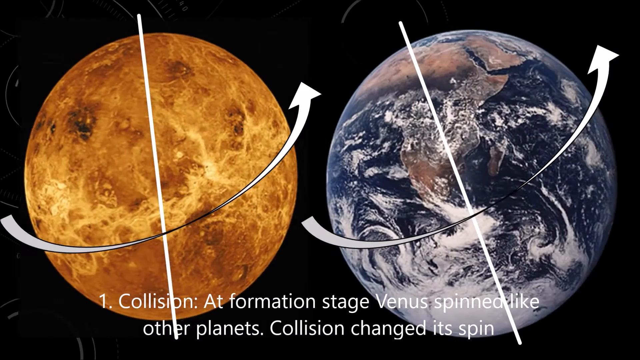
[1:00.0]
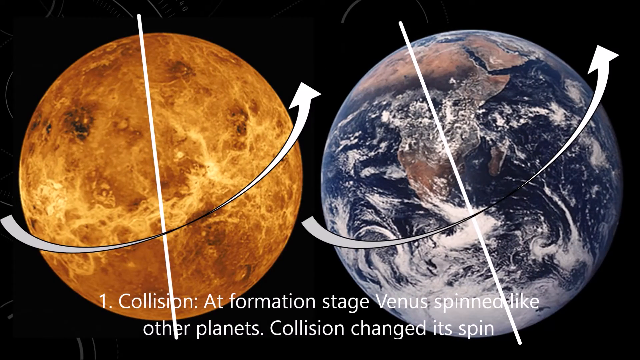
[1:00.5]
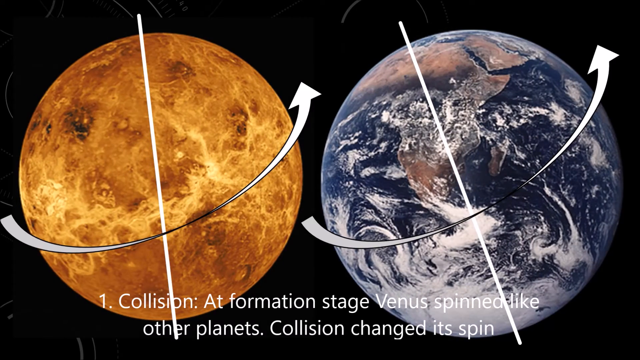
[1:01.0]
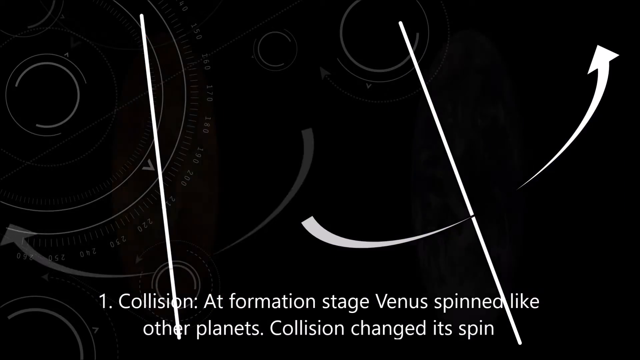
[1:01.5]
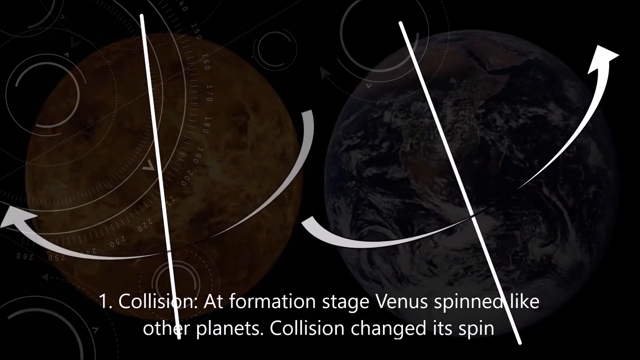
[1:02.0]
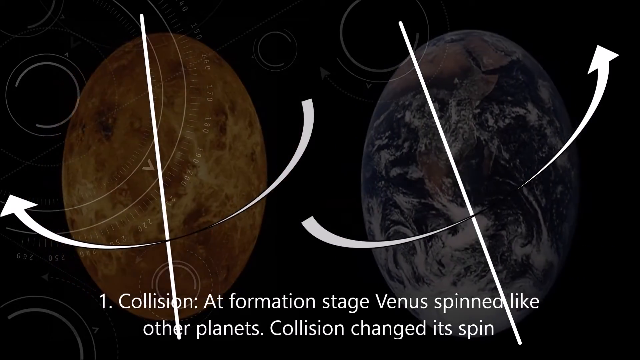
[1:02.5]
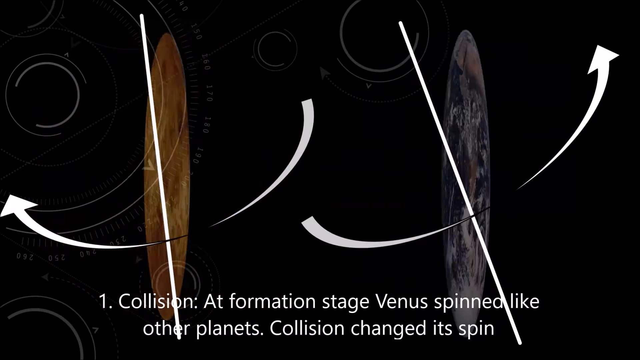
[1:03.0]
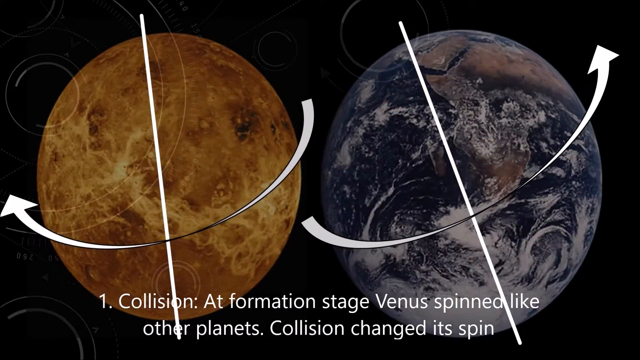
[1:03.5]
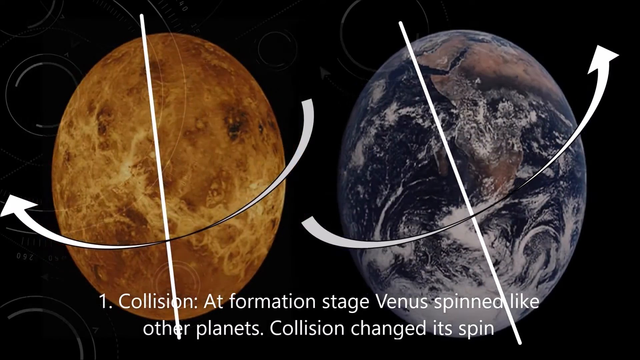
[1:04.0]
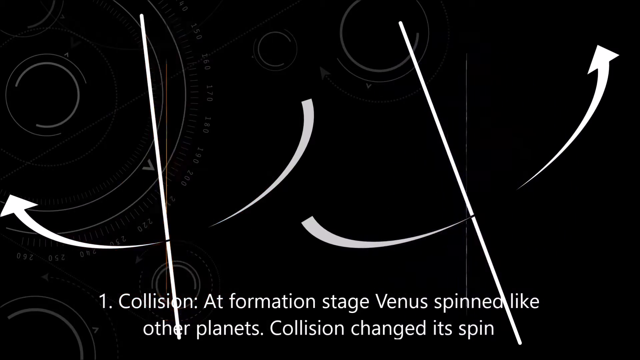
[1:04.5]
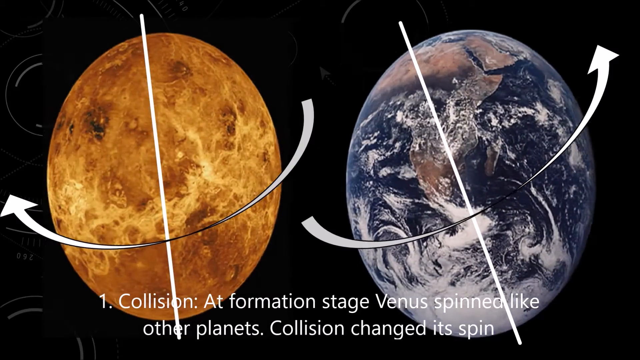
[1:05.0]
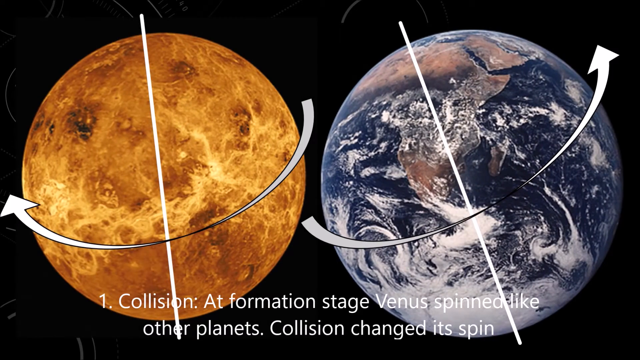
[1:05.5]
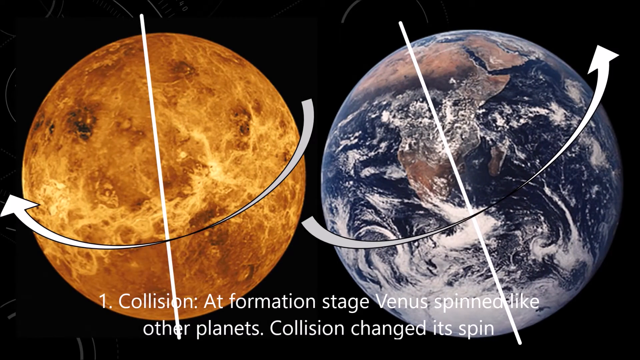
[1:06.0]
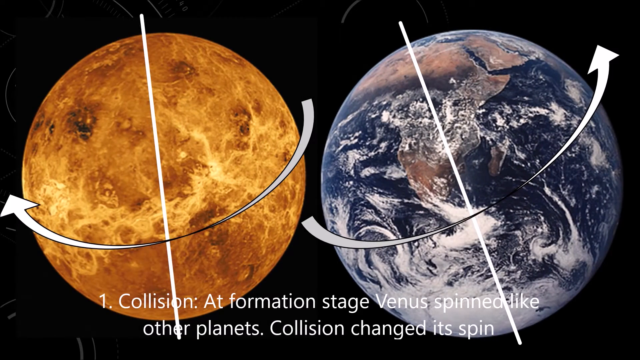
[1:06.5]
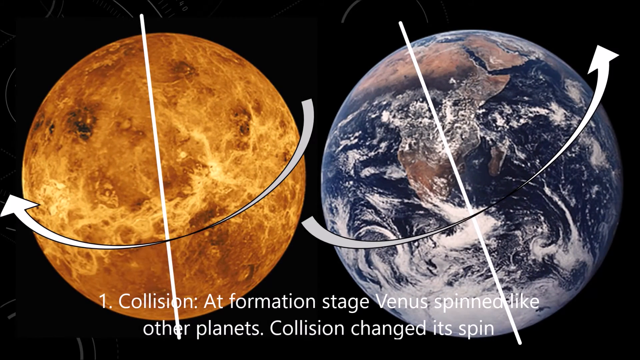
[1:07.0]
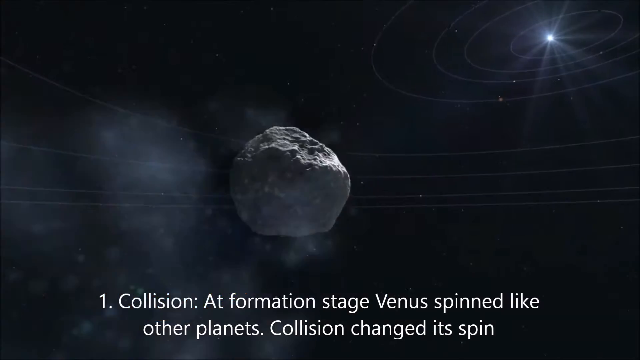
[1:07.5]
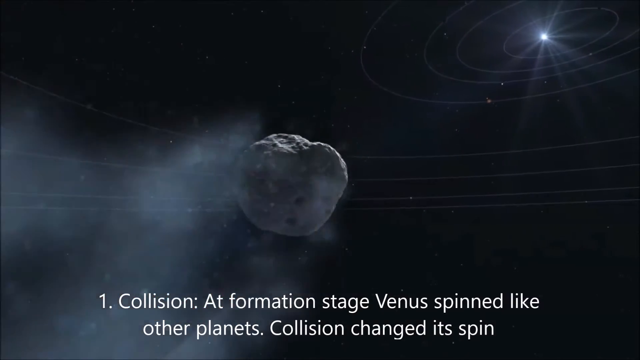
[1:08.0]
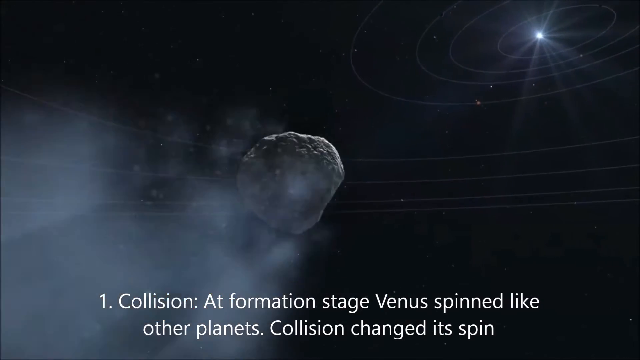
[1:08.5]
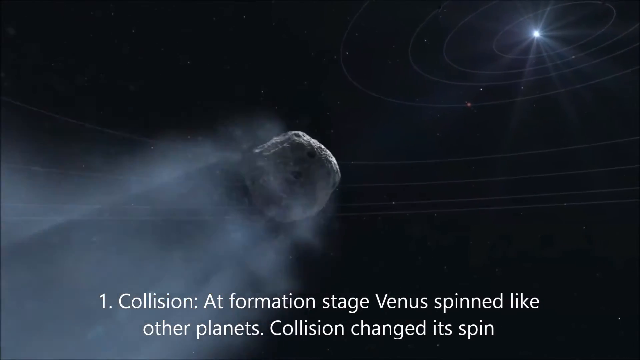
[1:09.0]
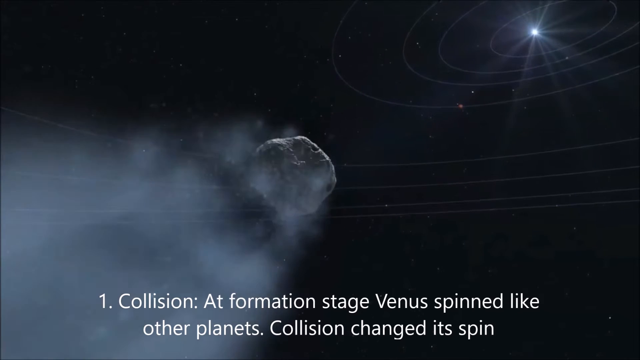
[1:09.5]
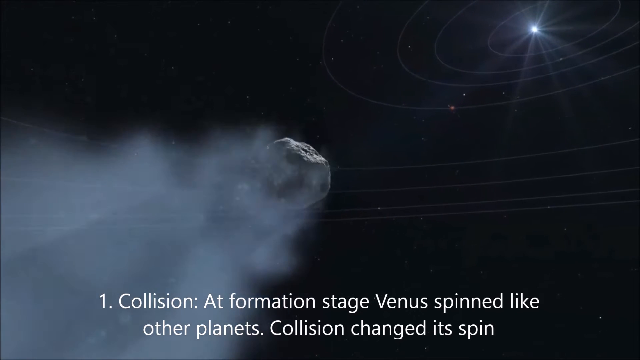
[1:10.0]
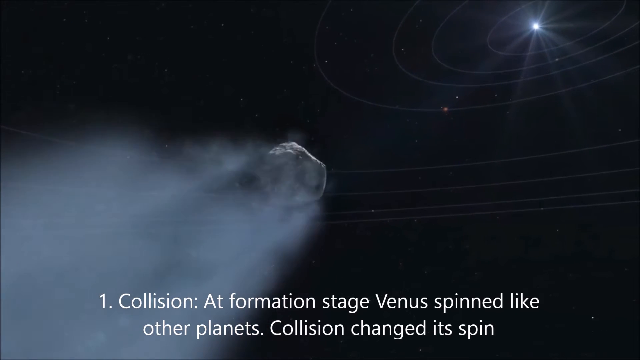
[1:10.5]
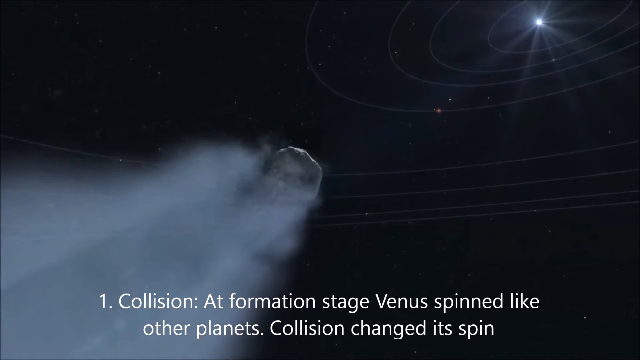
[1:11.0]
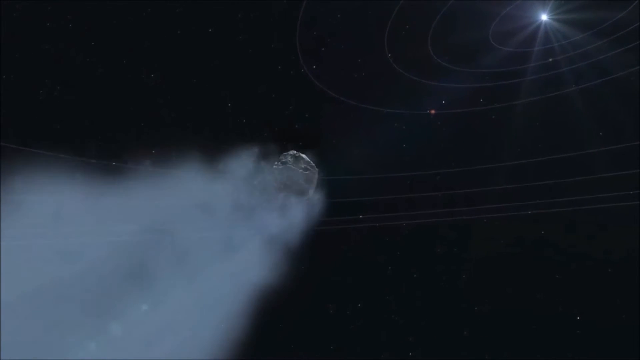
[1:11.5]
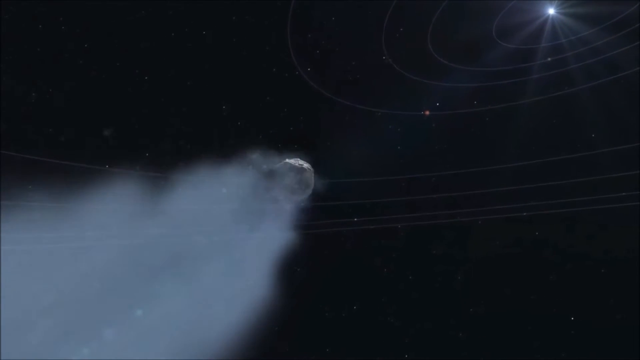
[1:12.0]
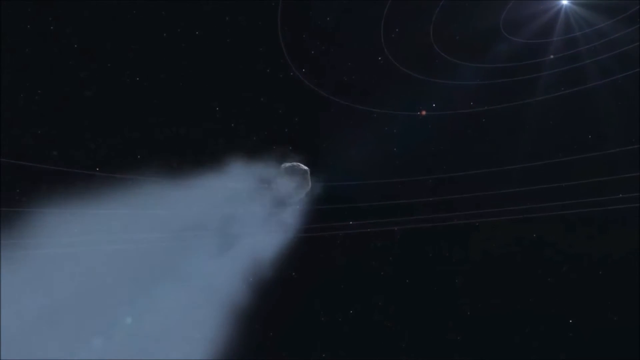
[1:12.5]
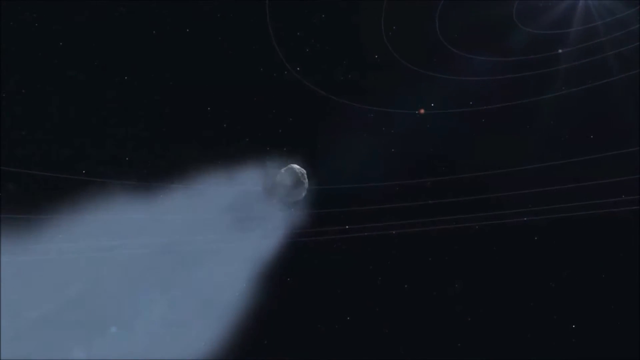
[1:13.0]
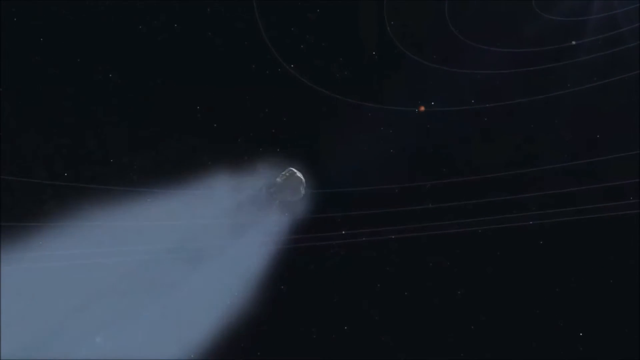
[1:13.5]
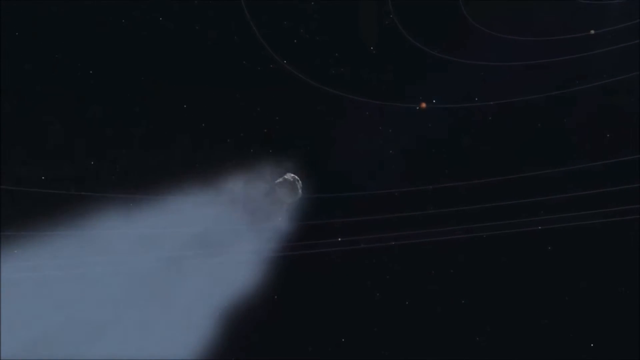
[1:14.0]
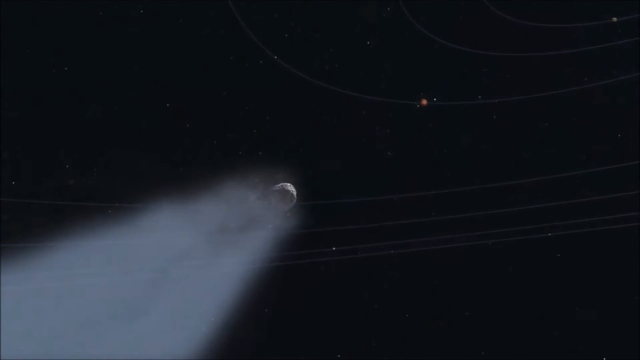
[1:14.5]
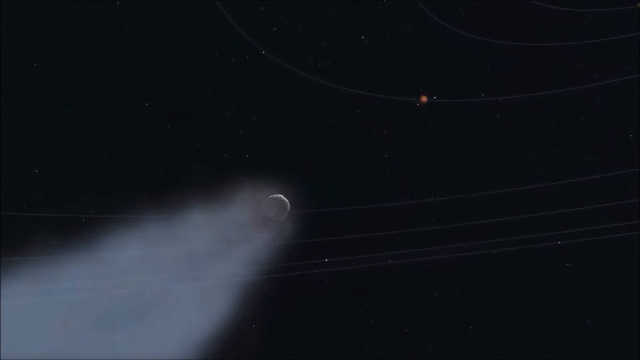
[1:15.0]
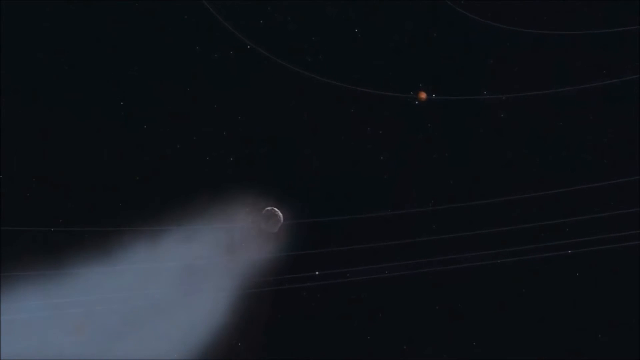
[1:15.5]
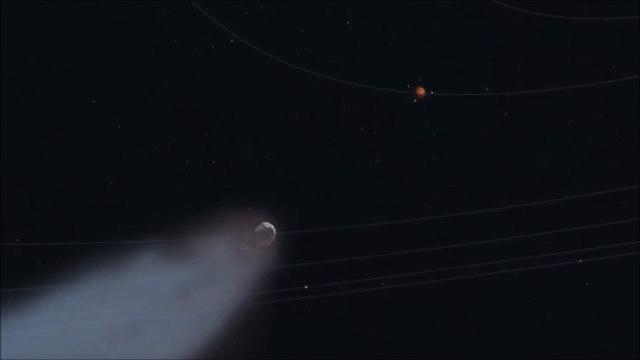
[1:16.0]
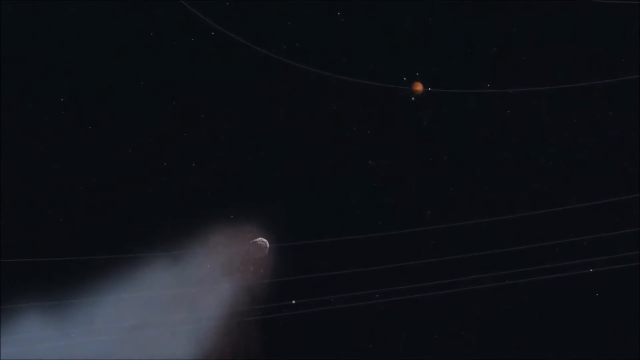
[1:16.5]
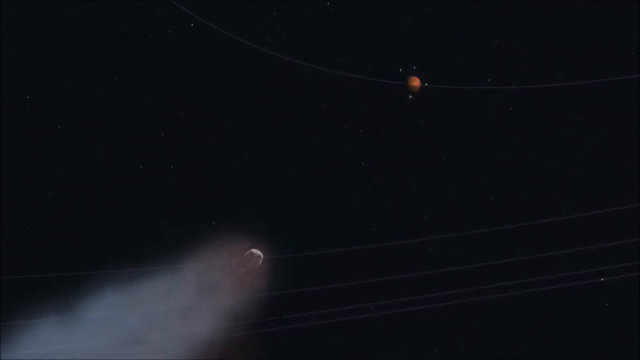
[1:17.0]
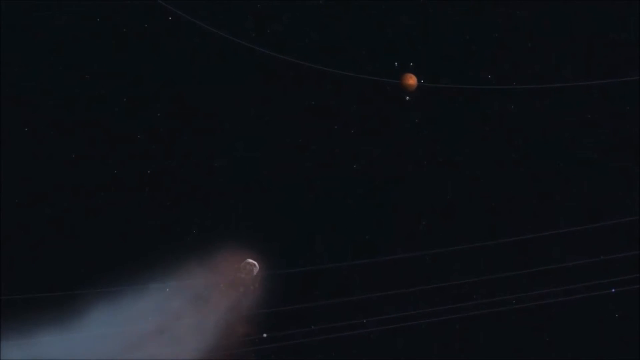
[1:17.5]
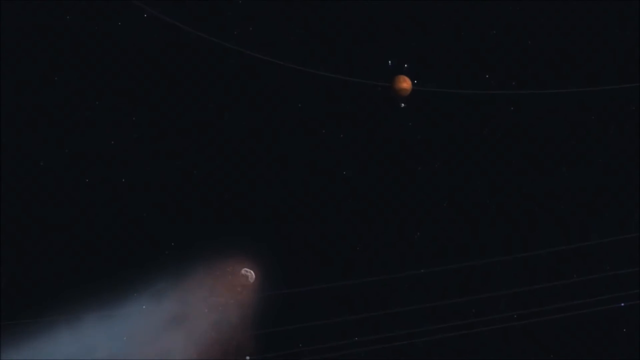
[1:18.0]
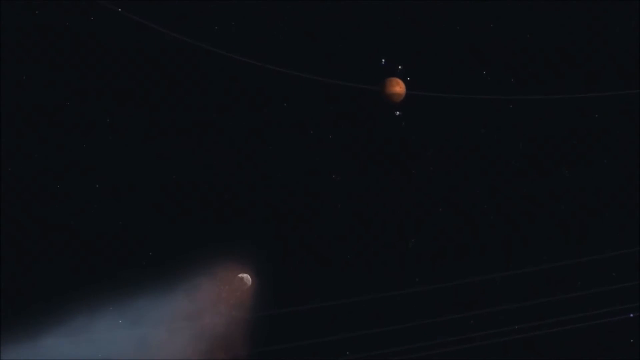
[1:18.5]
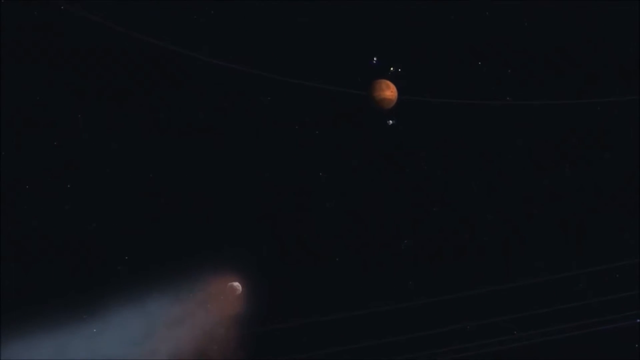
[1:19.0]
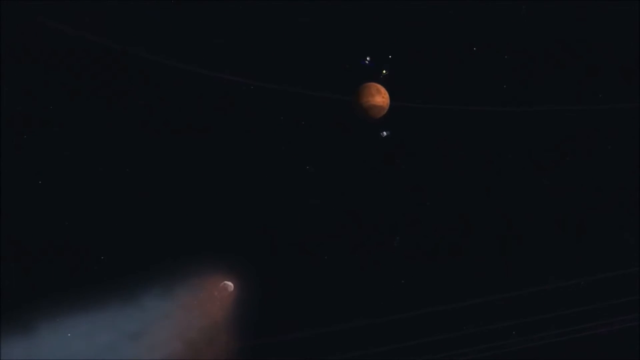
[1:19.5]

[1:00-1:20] Both planets remain on screen, both slightly slanted and still showing the line running from top to bottom; Earth is a little more slanted than Venus. Both planets have the same arrow running from left to right, and at the bottom center the text reads "One collision at formation stage, Venus spin like other planets, collisions changed its spin." Both planets are then shown rotating. Next an asteroid with smoke coming out from its end travels through outer space, and a small round object that looks to be Venus is approaching. The asteroid looks to be approaching Venus at a very high speed. The entire video is computer generated, and no humans or animals are present.